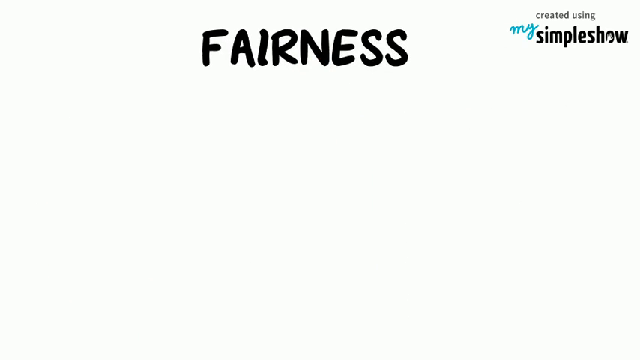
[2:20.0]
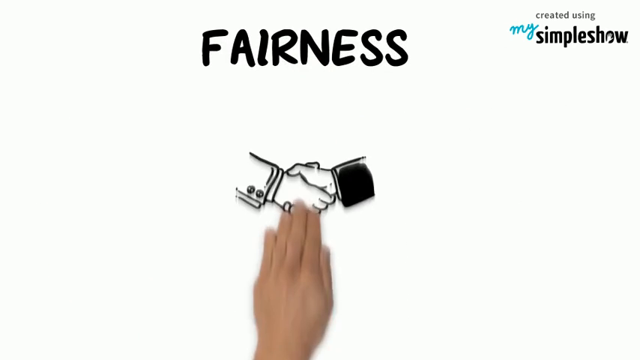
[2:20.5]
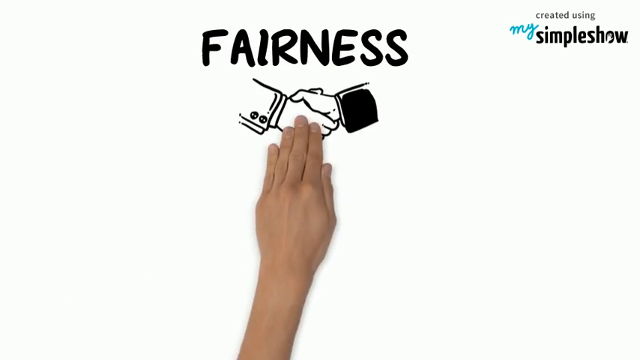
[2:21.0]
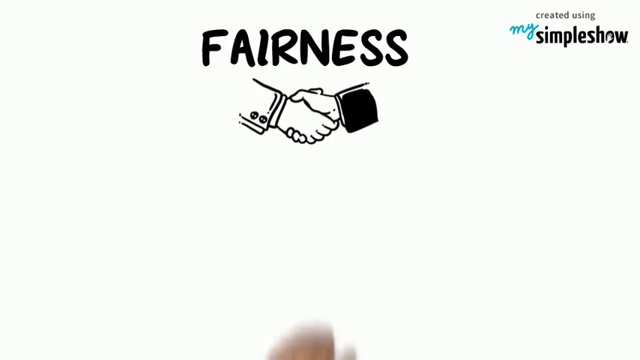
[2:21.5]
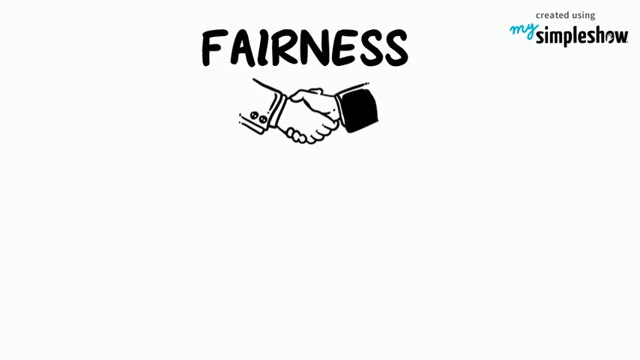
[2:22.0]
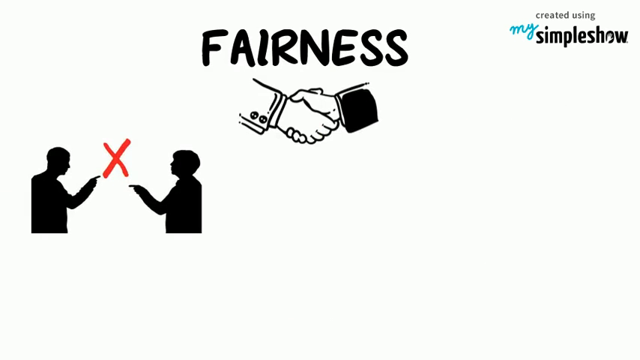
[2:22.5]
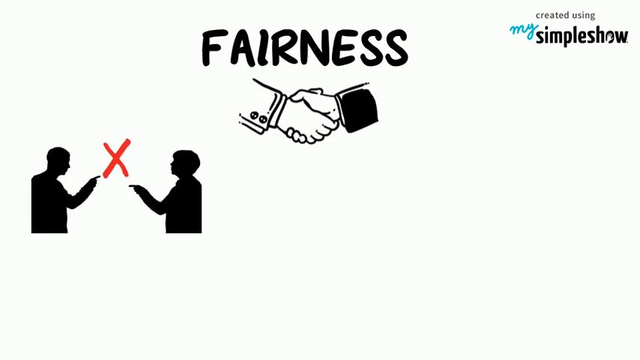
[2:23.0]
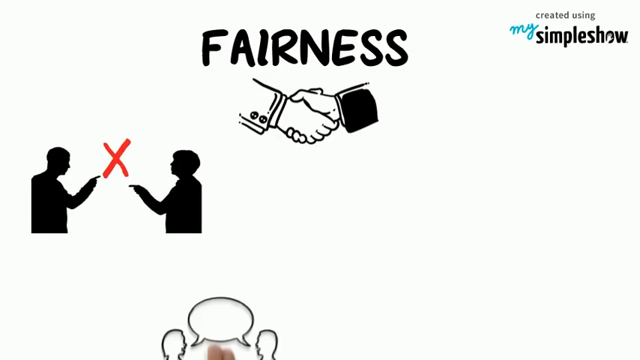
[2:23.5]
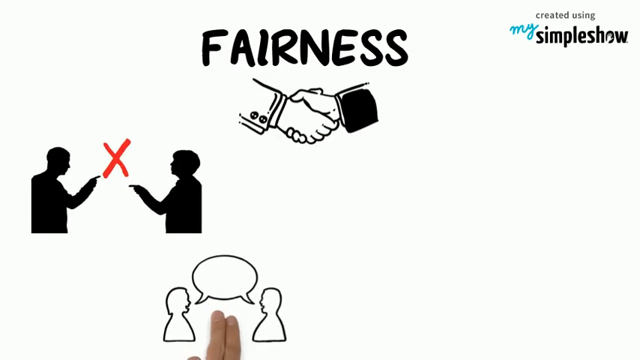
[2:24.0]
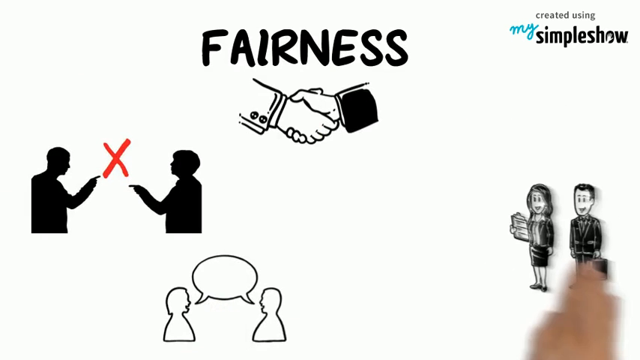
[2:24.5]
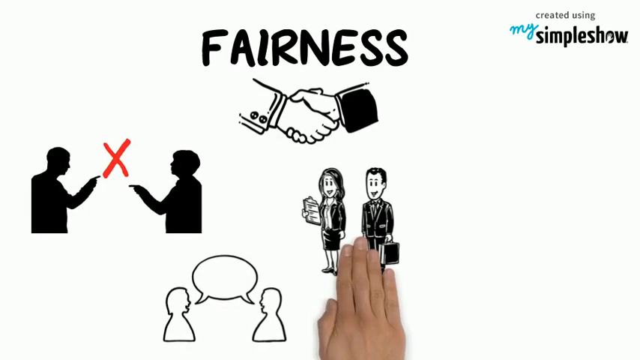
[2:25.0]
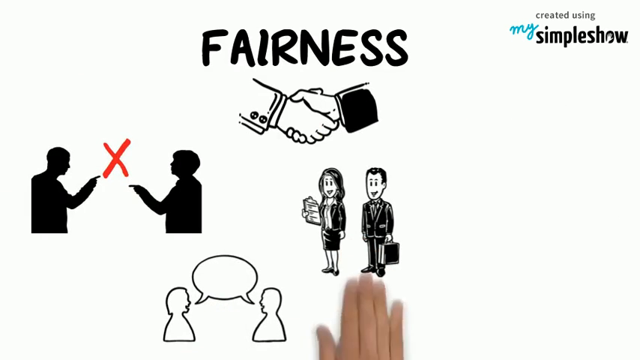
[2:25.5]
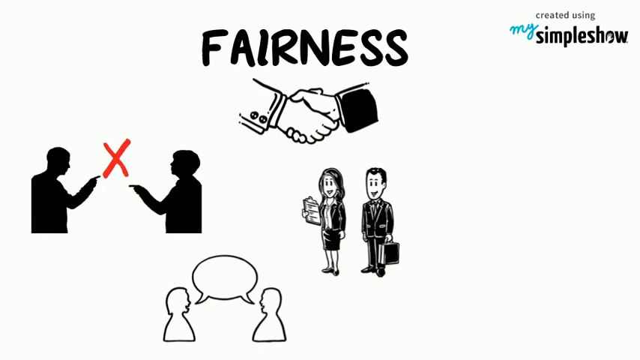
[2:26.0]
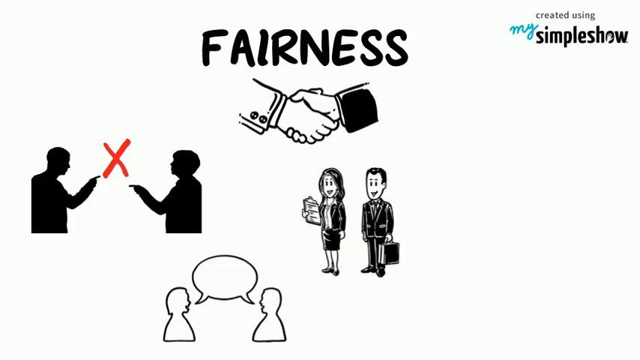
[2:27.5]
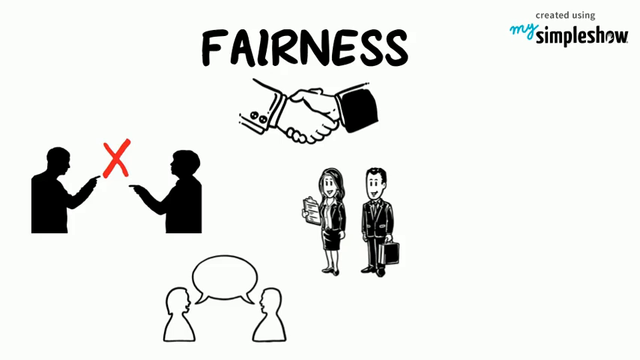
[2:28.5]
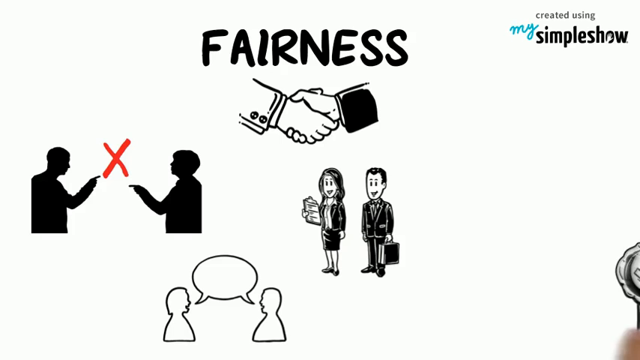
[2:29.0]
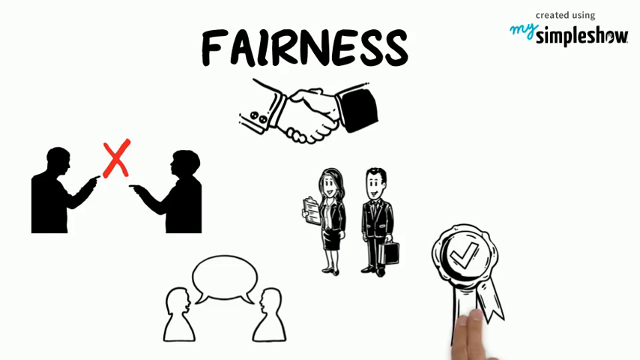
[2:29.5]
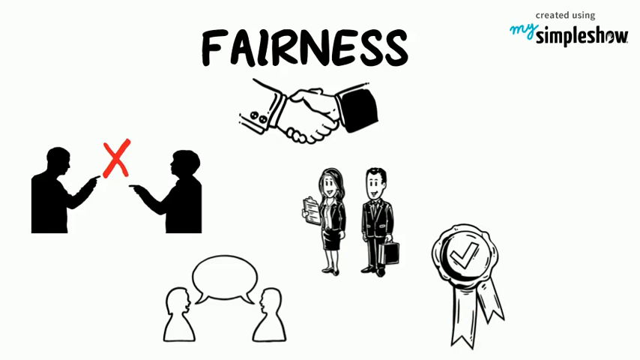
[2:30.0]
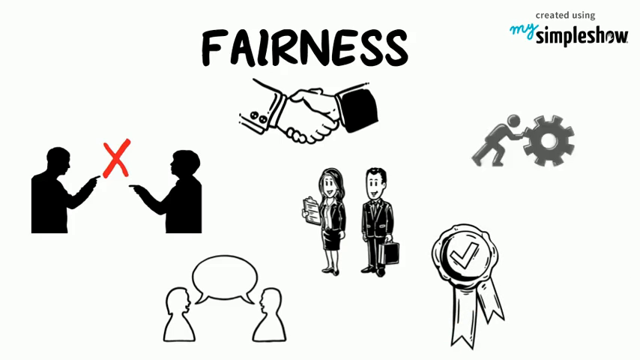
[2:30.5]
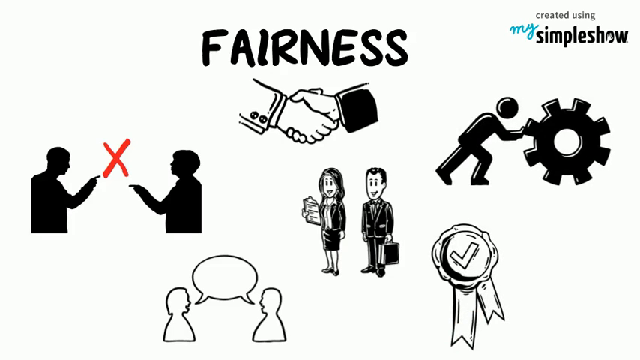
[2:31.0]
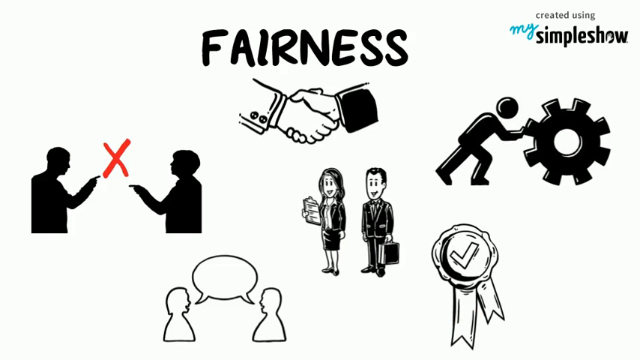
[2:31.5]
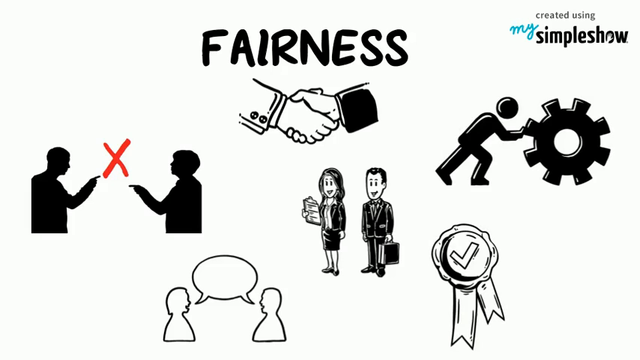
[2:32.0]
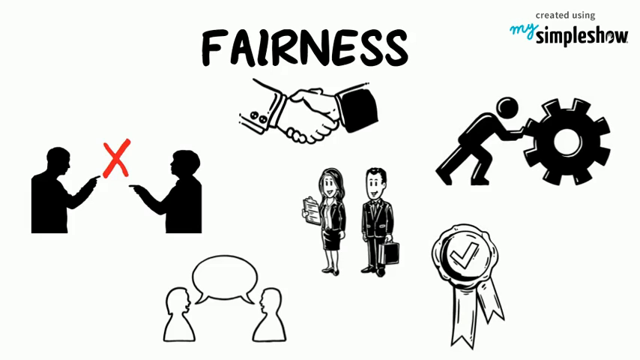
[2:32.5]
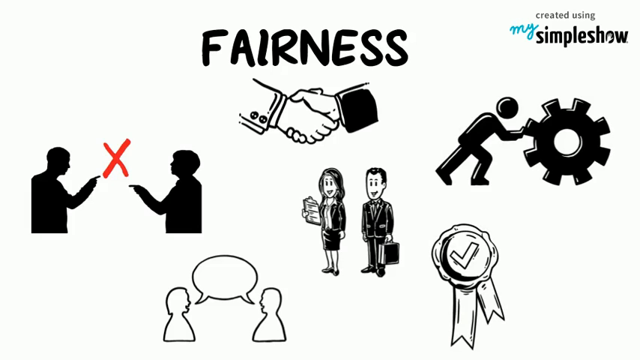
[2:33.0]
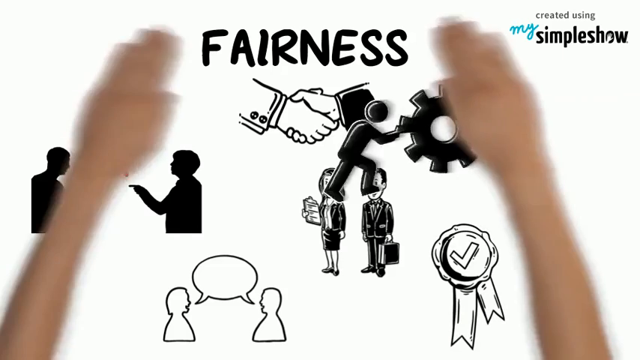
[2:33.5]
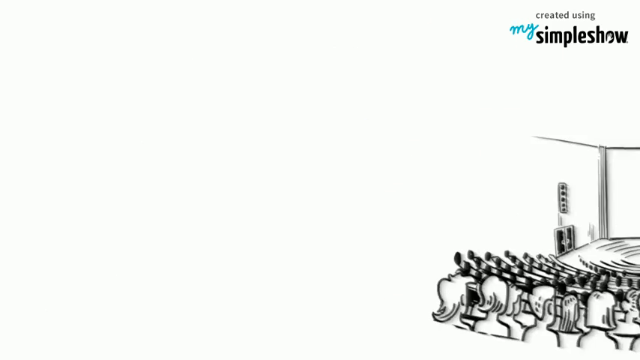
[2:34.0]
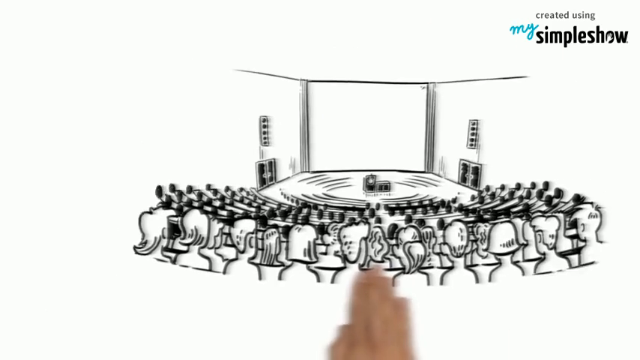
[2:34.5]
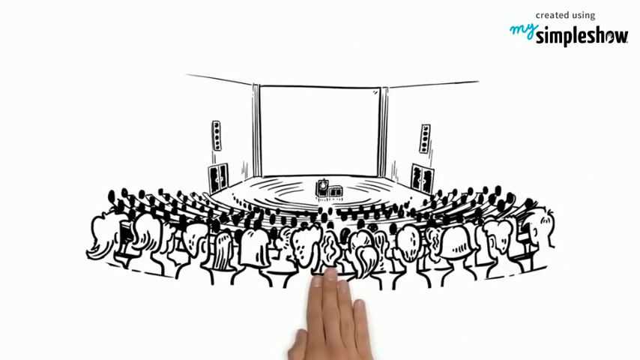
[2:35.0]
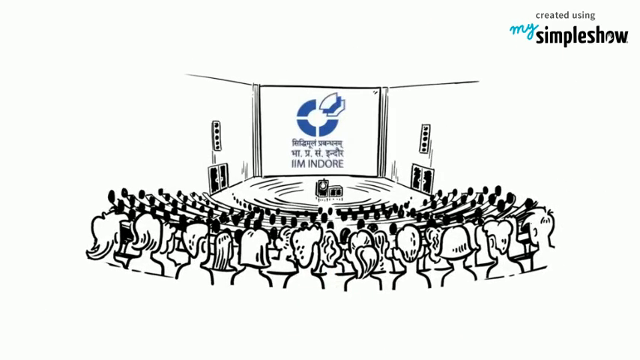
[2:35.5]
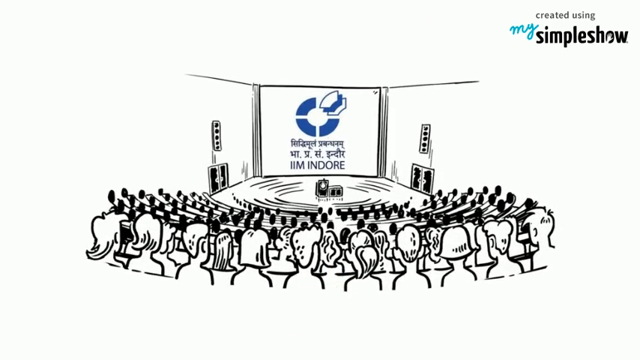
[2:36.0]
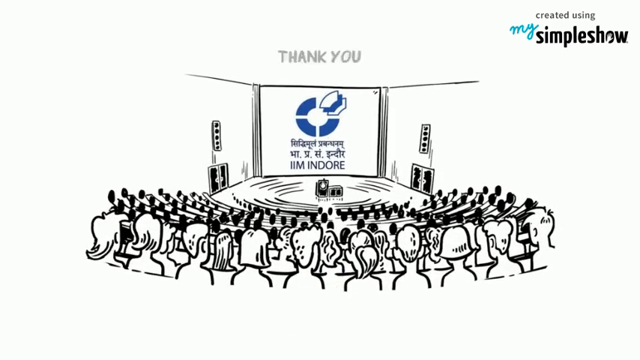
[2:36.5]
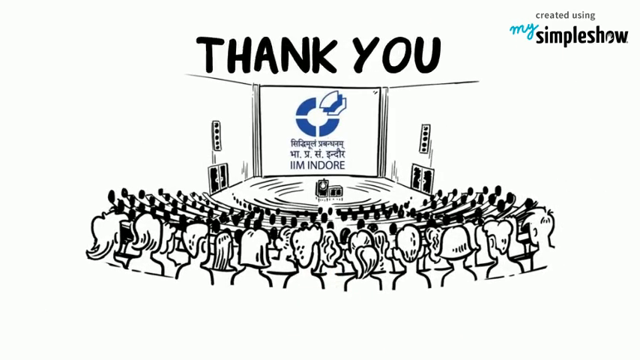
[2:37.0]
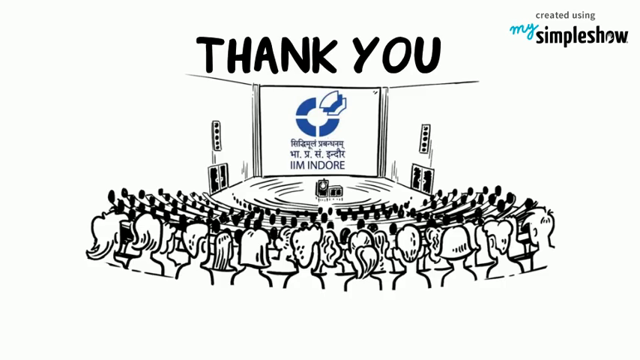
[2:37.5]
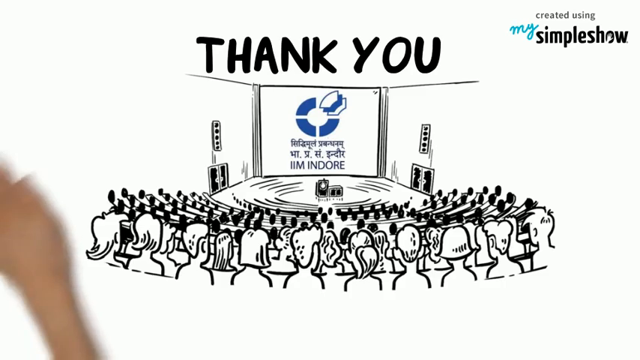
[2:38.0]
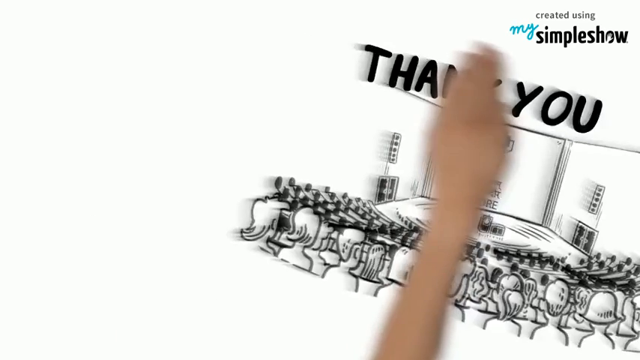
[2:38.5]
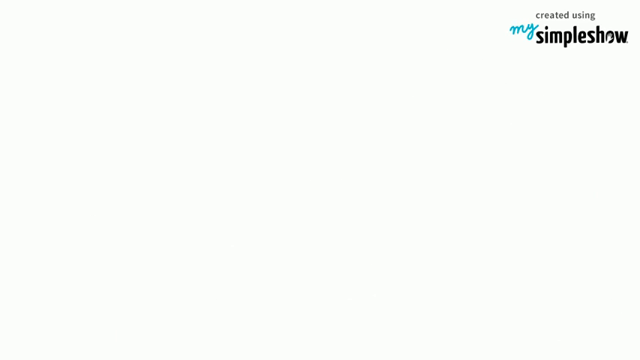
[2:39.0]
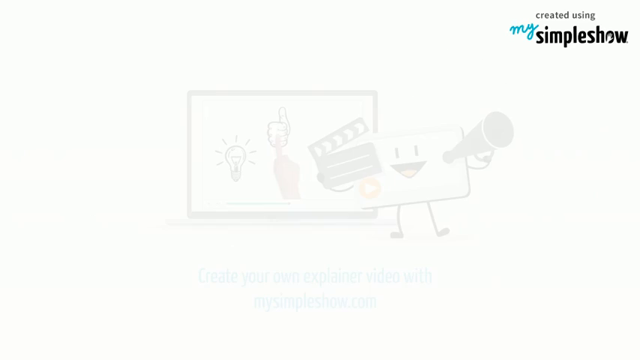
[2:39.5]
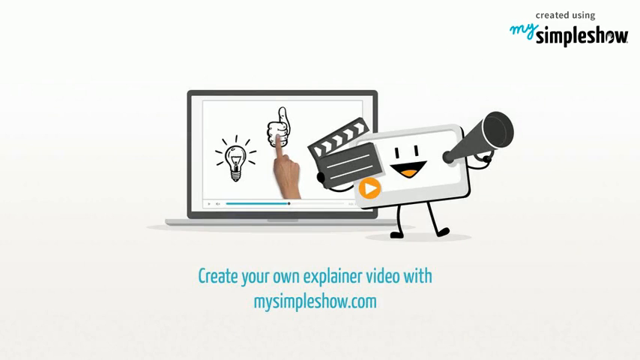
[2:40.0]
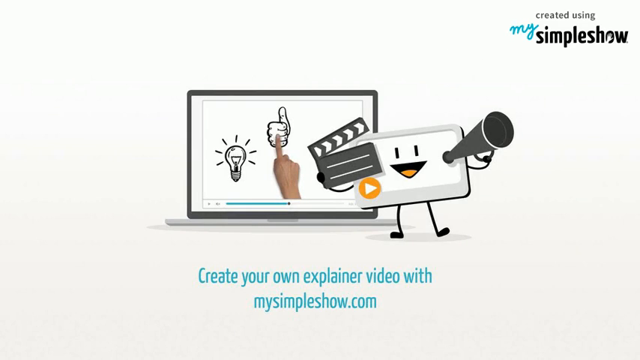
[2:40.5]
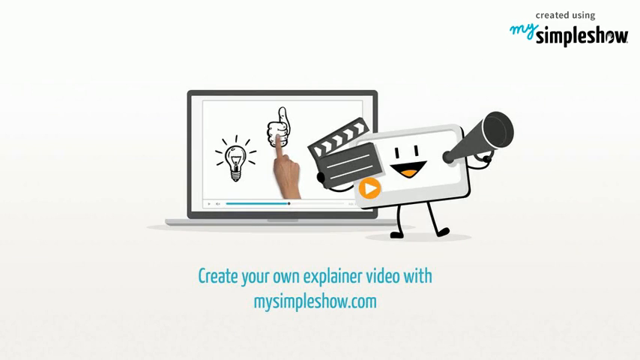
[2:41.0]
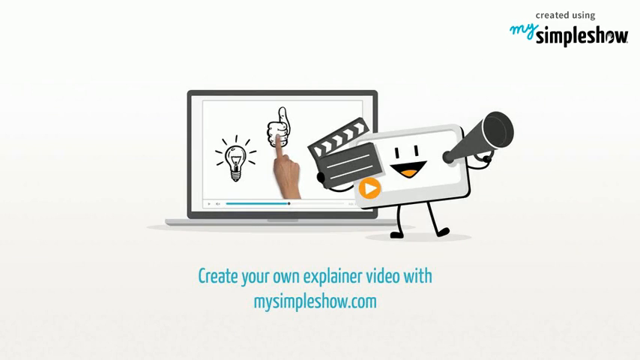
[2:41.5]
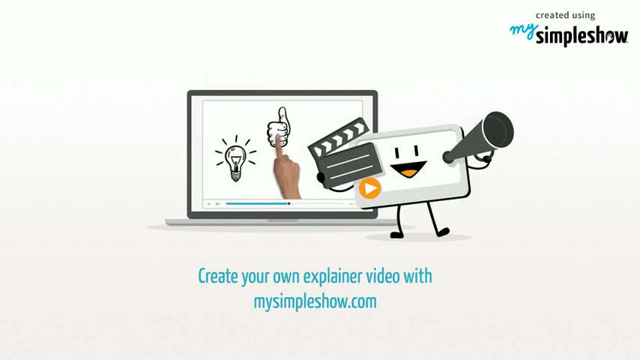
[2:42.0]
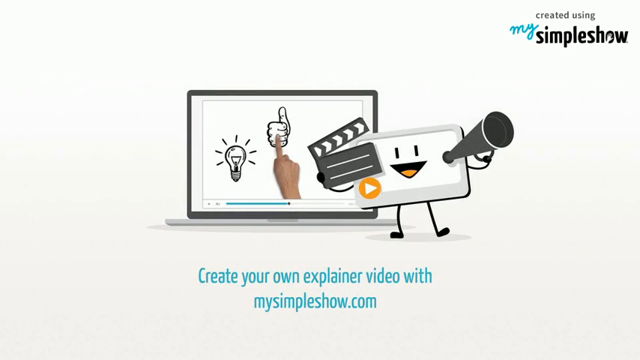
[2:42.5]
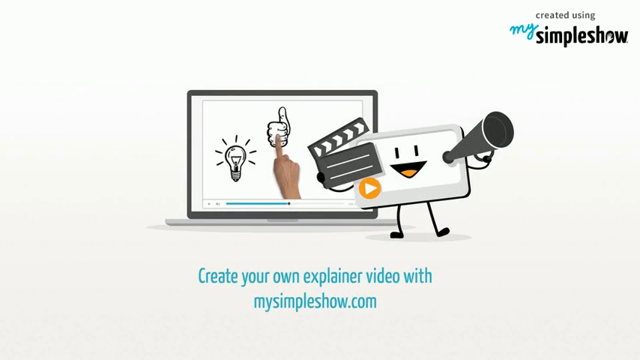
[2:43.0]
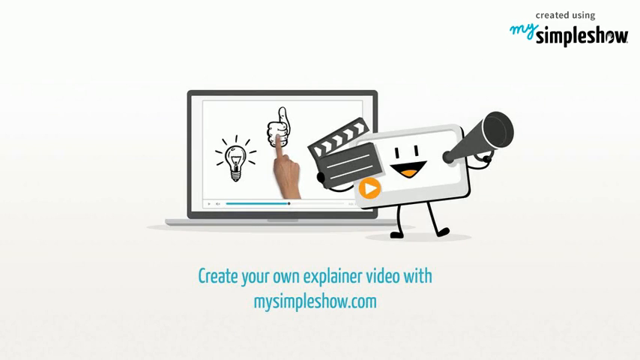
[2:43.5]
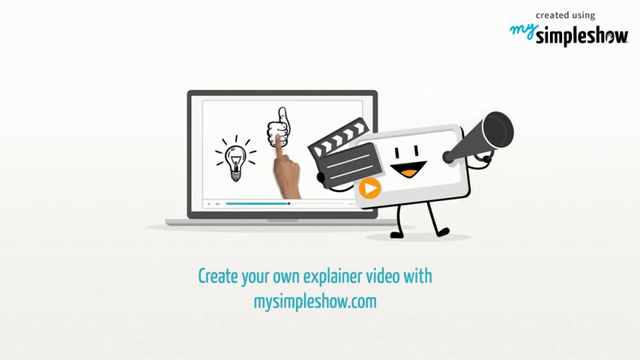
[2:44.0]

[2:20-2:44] The word "fairness" appears with two hands shaking each other; one wears something like a white suit and the other a dark suit. Beneath are two figures pointing toward a manipulation sign figure between them. A figure shows two people having a discussion. A woman's finger points out a man and a woman; the woman holds some books while the man holds a briefcase. Then something that looks like an award with a mark in it appears. There is something that looks like an auditorium with a stage, and the screen there shows inscriptions that look like Asian words. The words "thank you" appear. Finally, a computer system with a speaker appears with an inscription mentioning a spin-off video with "mysimpleshow.com."